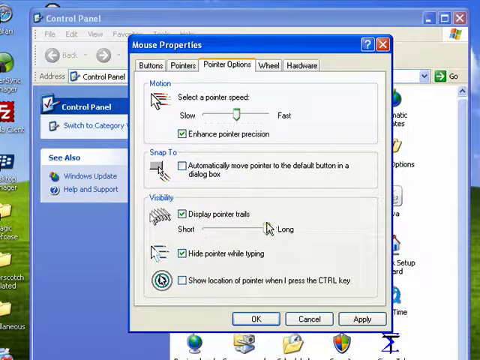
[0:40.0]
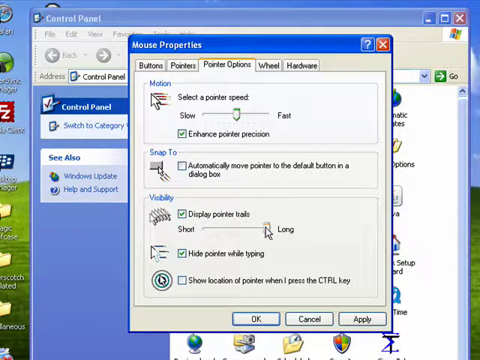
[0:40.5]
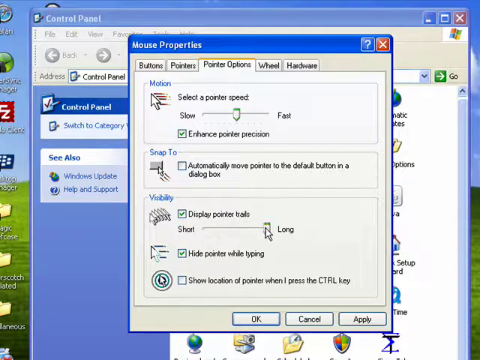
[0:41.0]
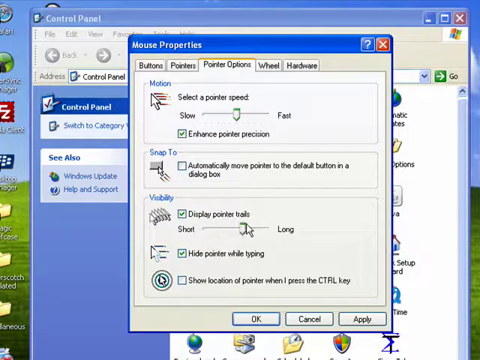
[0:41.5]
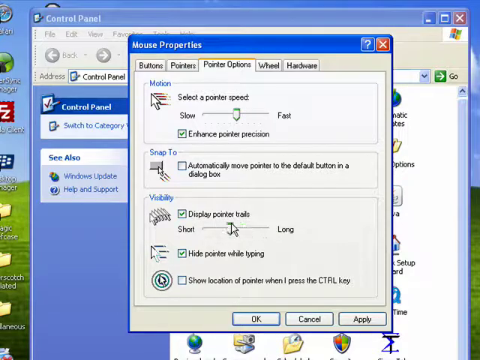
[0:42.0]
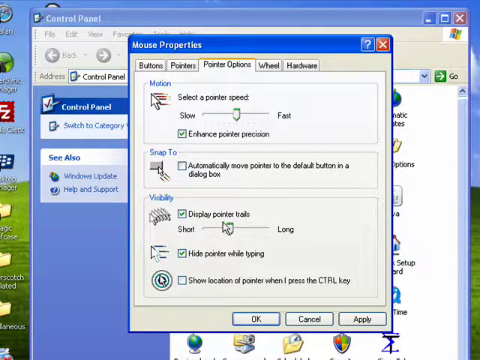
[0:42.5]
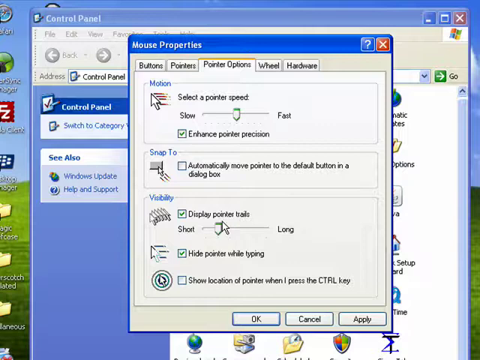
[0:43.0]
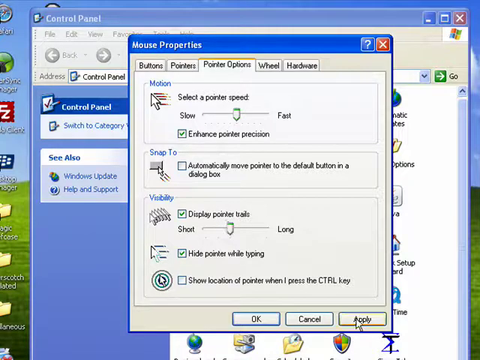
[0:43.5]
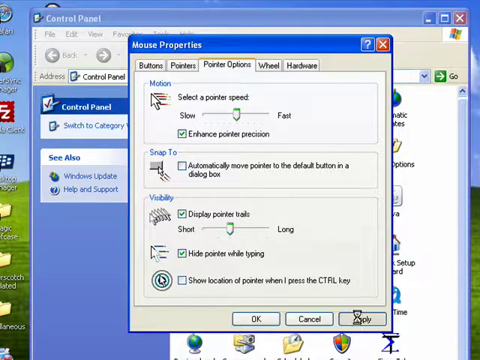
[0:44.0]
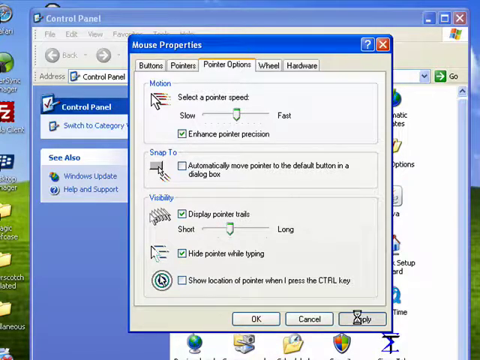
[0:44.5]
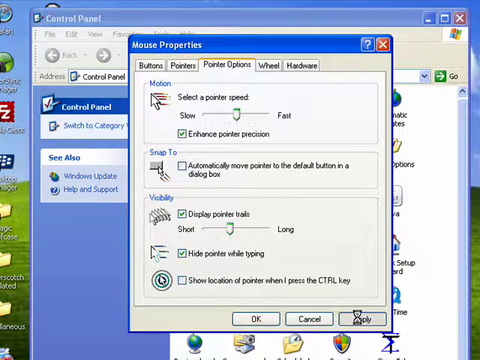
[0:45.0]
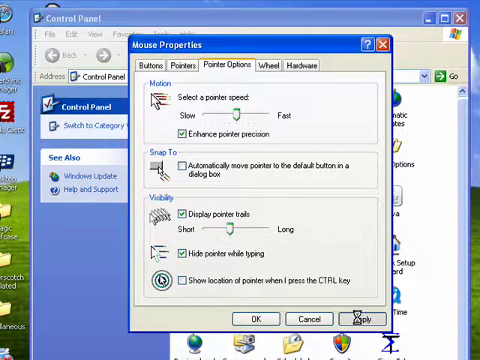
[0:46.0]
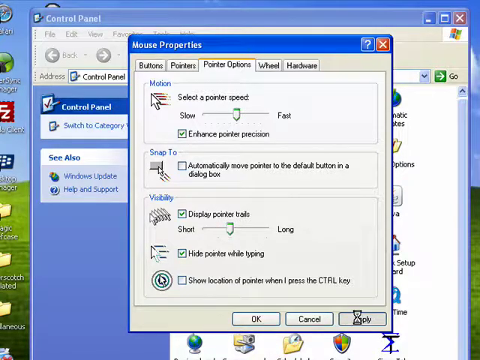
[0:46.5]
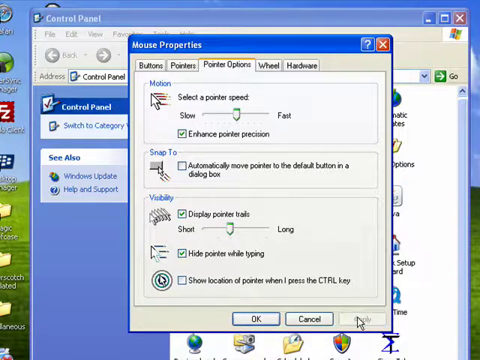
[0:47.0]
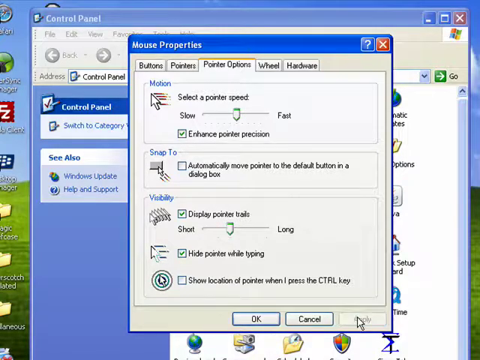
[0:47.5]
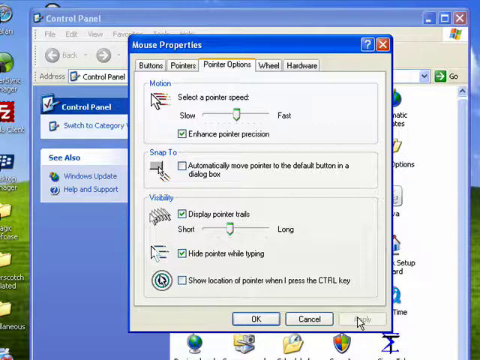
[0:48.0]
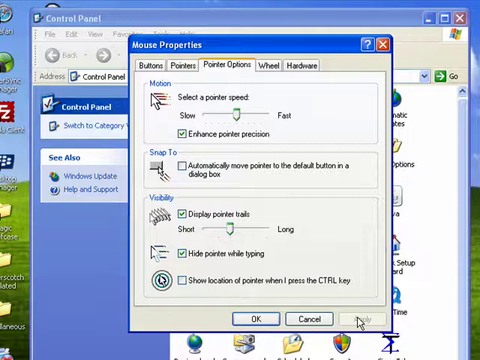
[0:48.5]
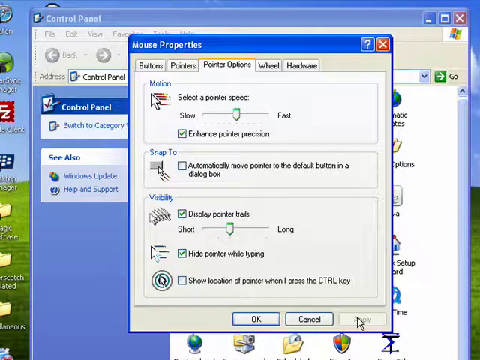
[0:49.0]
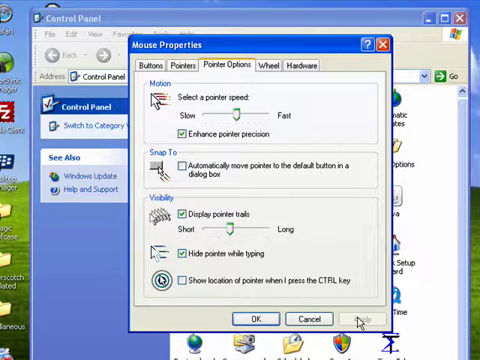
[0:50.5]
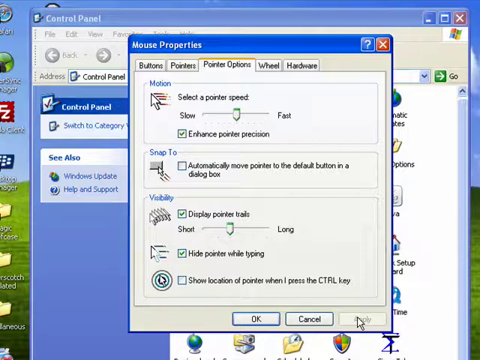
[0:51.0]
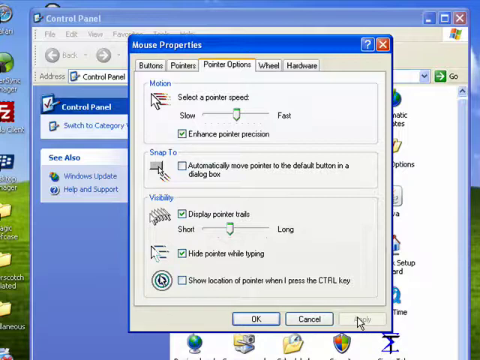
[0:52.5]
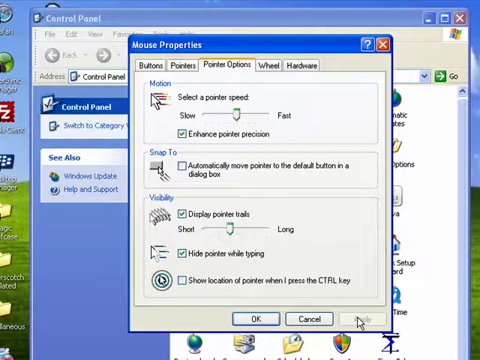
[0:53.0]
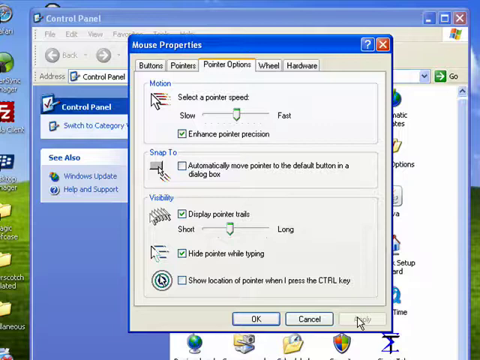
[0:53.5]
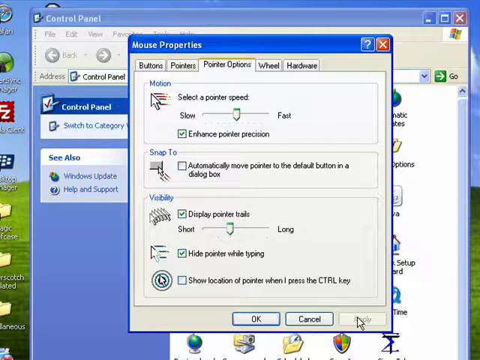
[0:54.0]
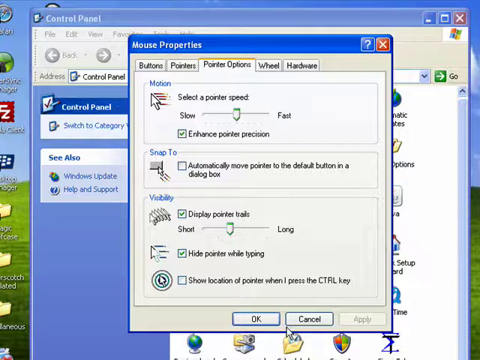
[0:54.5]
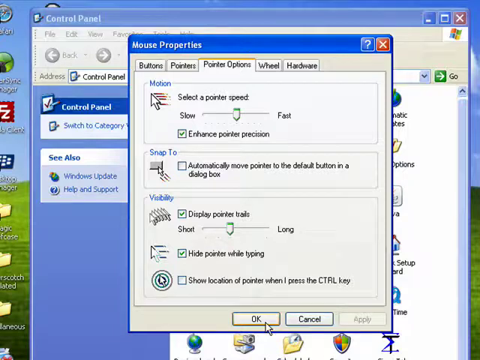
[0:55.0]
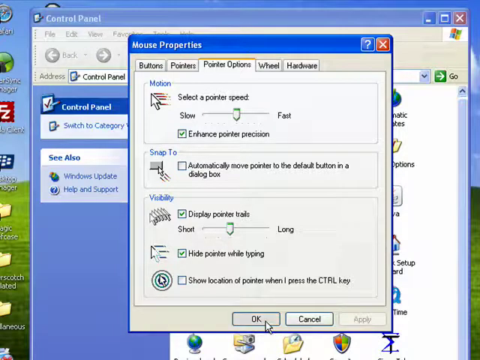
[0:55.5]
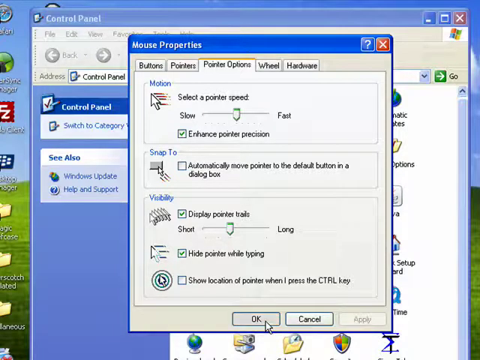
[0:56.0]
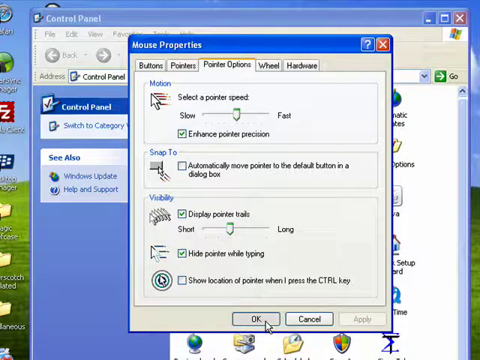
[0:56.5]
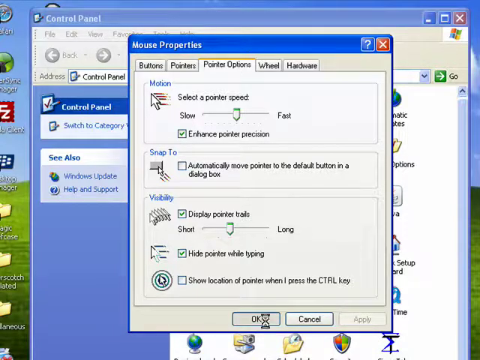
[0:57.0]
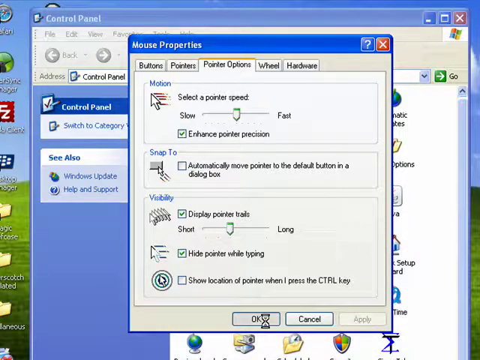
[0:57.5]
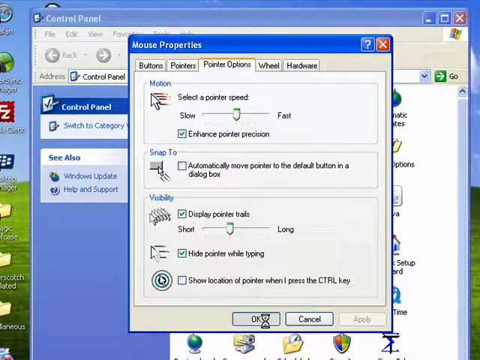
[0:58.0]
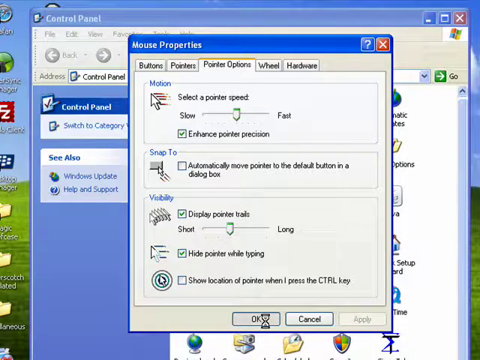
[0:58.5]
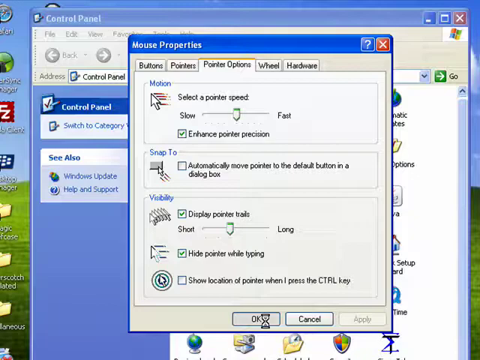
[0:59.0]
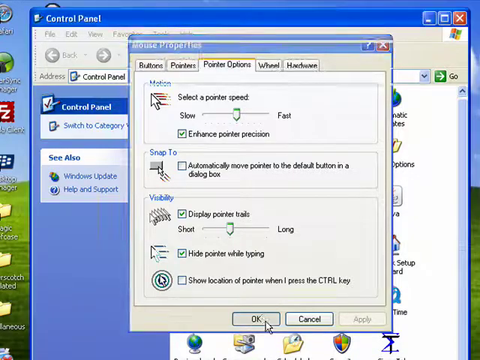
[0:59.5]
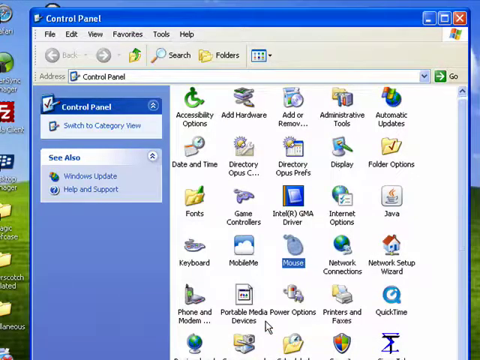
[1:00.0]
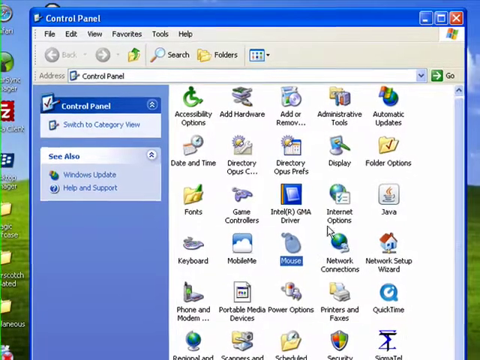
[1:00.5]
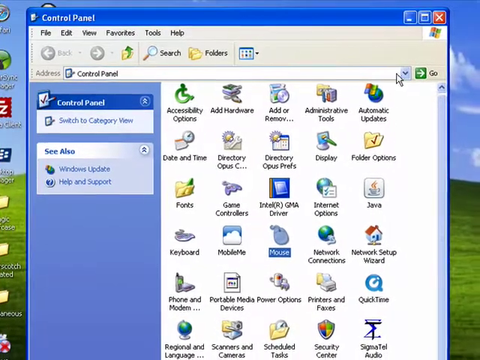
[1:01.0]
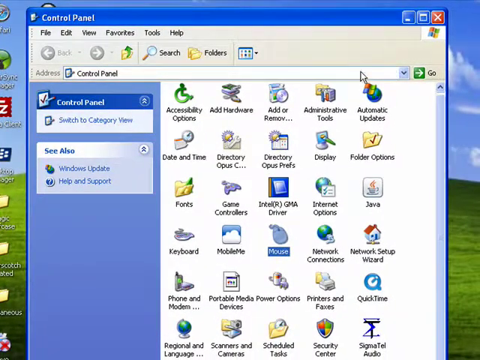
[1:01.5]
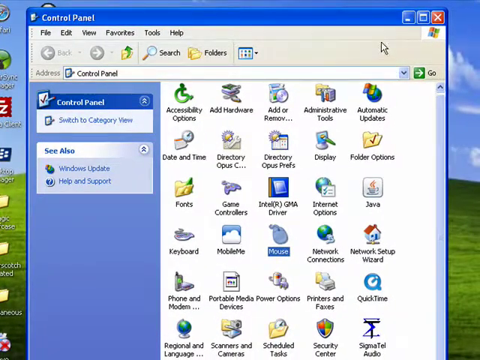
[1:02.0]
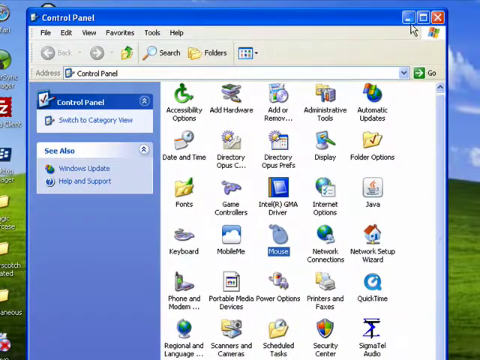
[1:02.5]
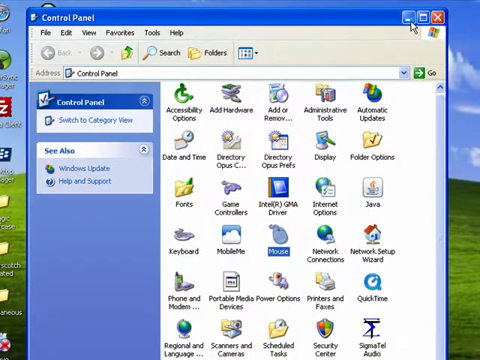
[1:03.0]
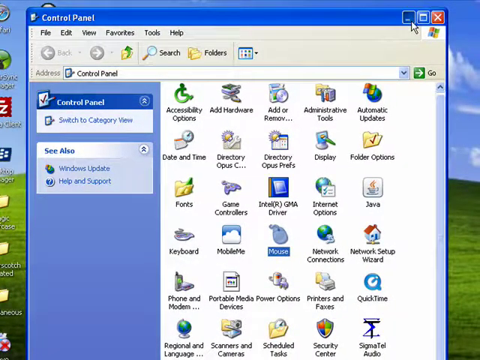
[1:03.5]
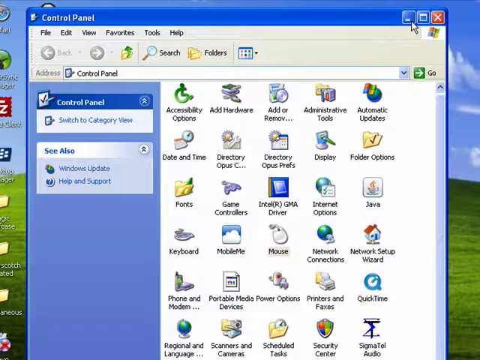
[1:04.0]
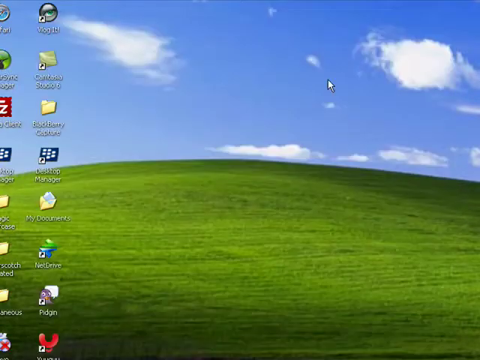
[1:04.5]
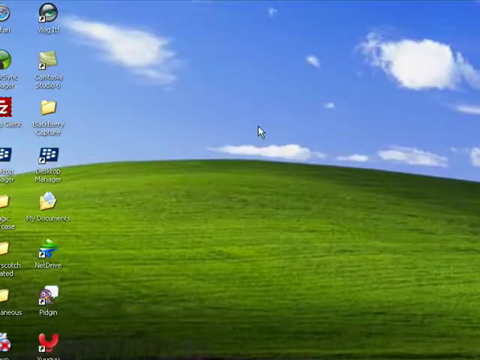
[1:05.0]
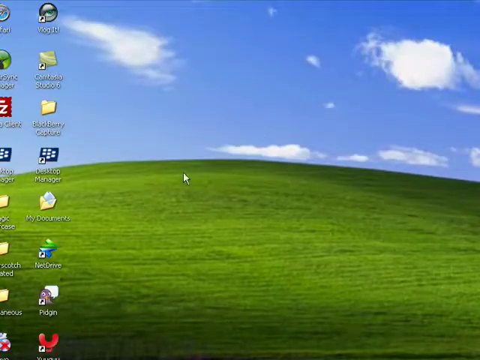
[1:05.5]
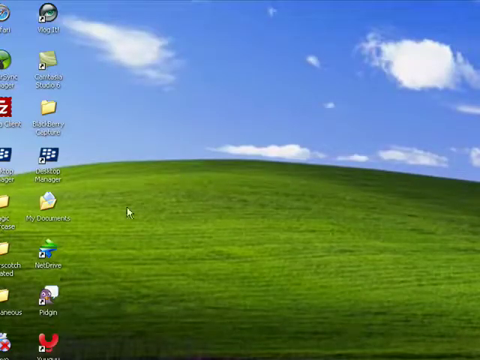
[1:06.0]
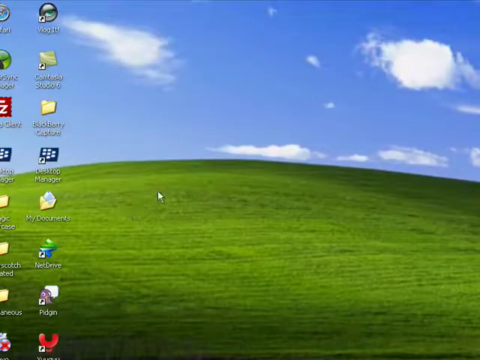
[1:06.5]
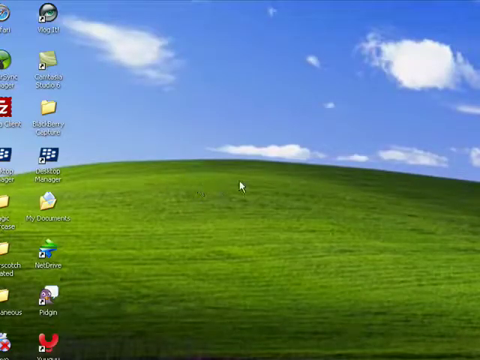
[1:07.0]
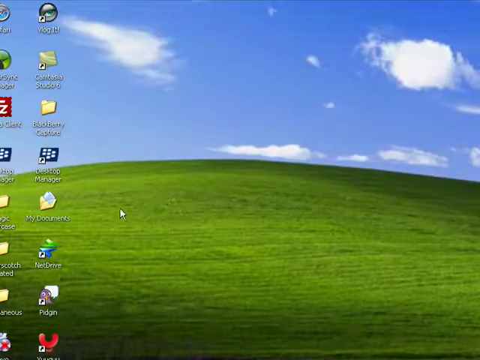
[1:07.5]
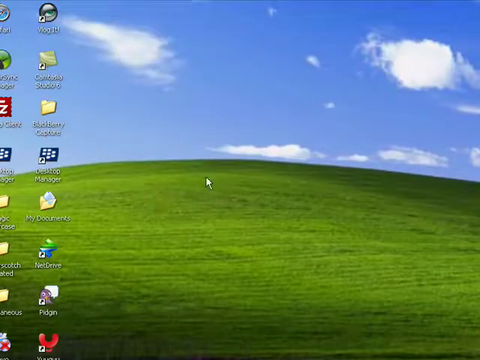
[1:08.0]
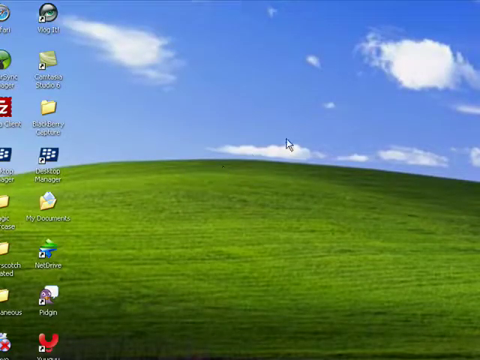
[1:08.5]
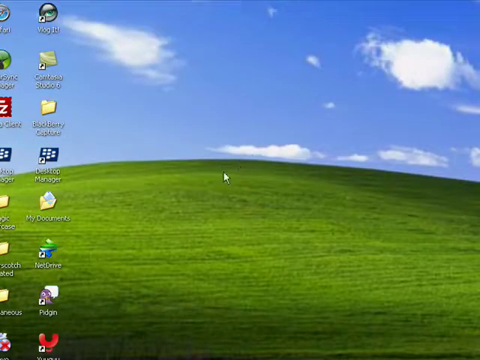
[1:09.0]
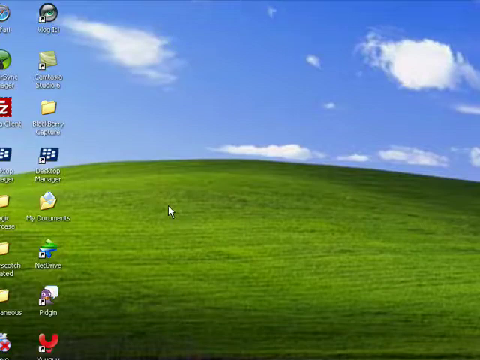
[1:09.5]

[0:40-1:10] The mouse pointer icon has just been selected. On display pointer trails, the setting is moved to an intermediate position between long and short, and apply is clicked. The apply button in the bottom right-hand corner goes gray but stays there. The mouse moves to the OK button and clicks it; an hourglass appears for a fraction of a second, and then the mouse properties page goes away. The control panel is then minimized and closed out. The mouse is moved diagonally from upper right to lower left in a jerking fashion, jumping from one place to a significantly different place.